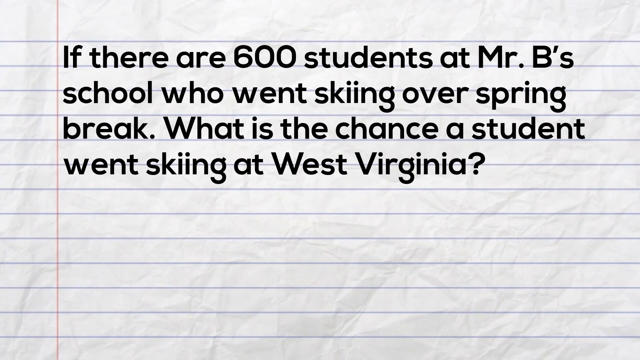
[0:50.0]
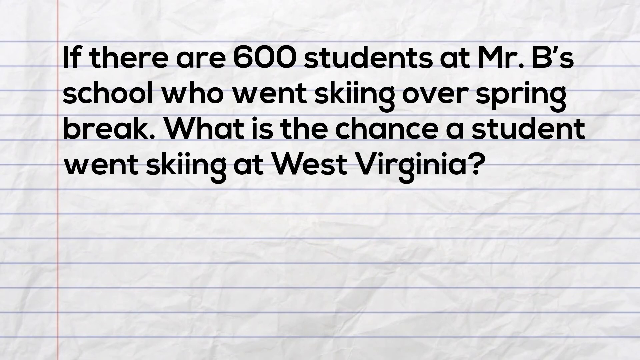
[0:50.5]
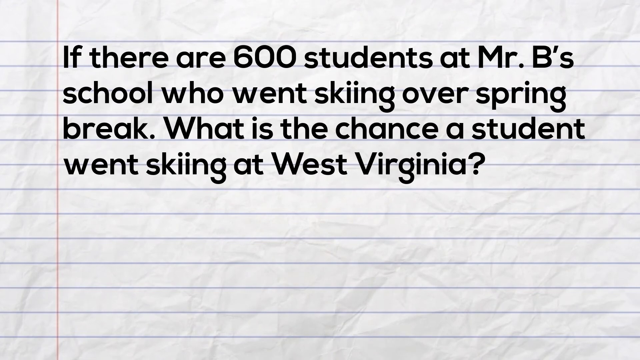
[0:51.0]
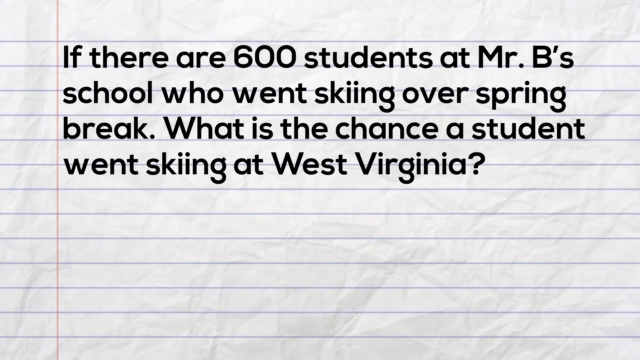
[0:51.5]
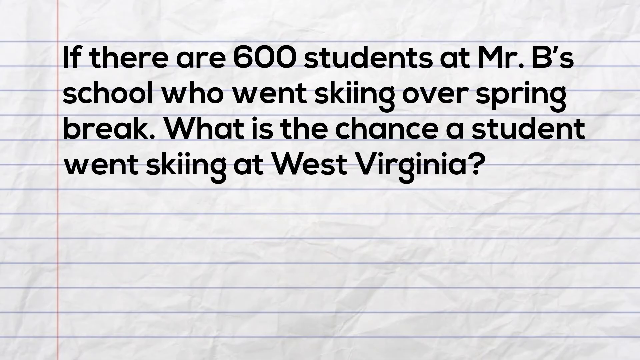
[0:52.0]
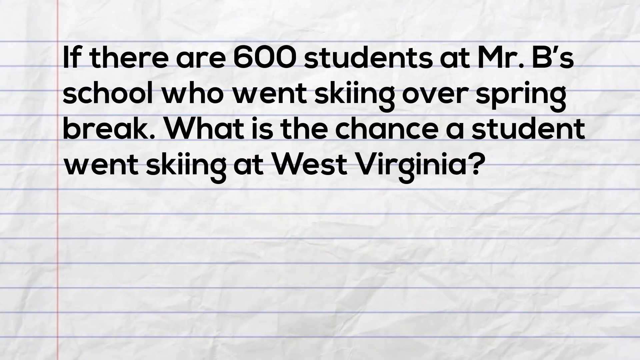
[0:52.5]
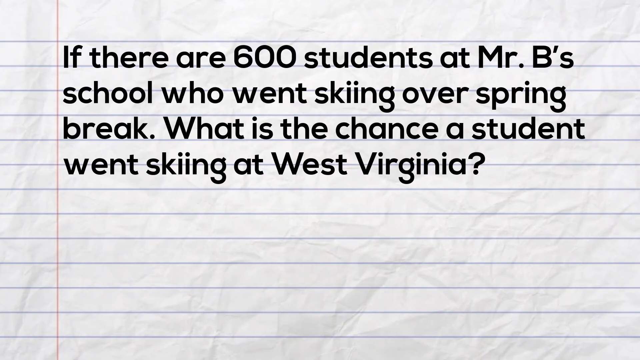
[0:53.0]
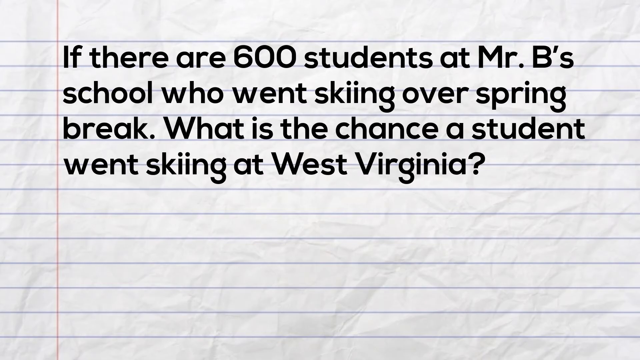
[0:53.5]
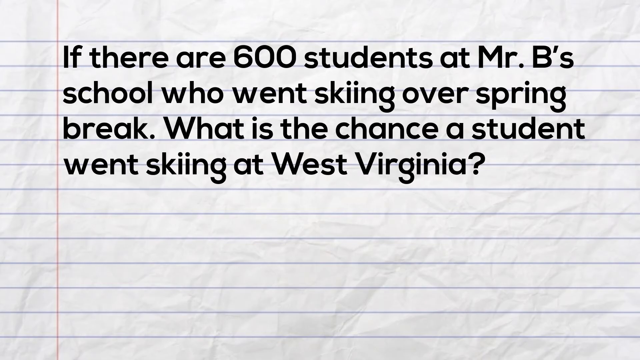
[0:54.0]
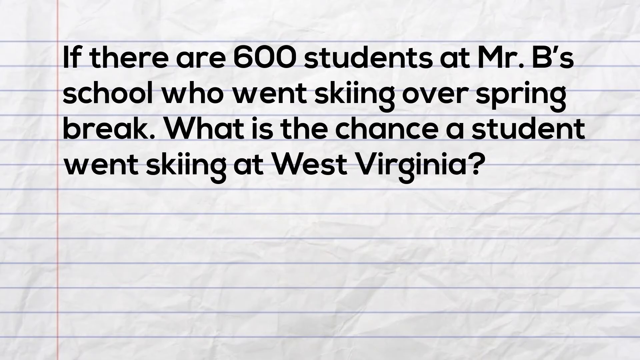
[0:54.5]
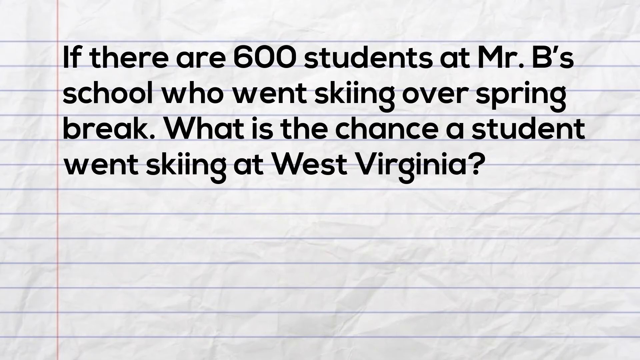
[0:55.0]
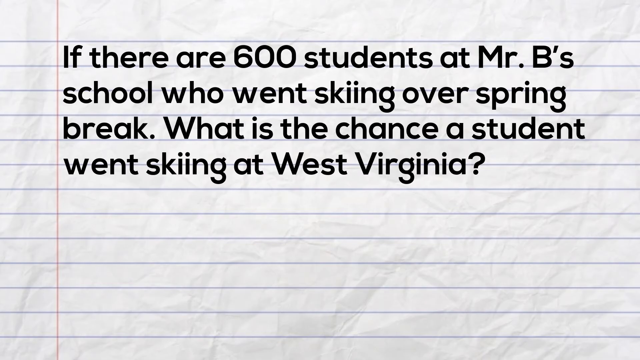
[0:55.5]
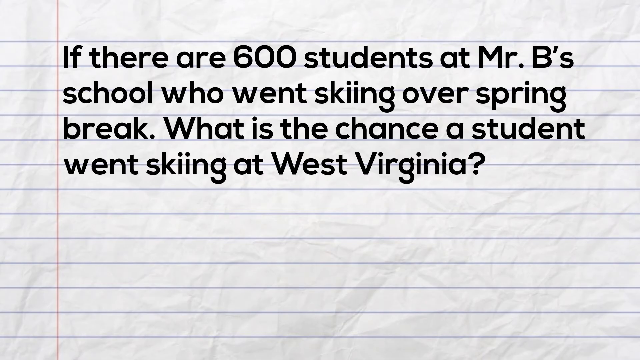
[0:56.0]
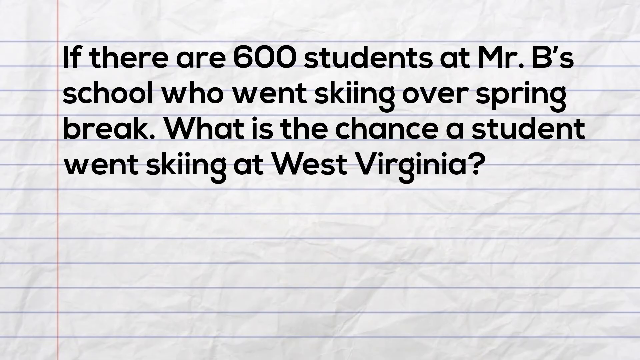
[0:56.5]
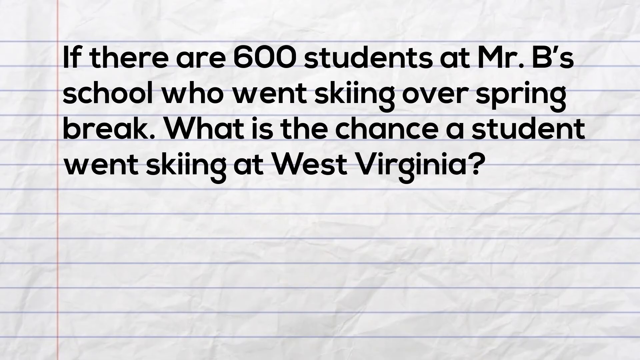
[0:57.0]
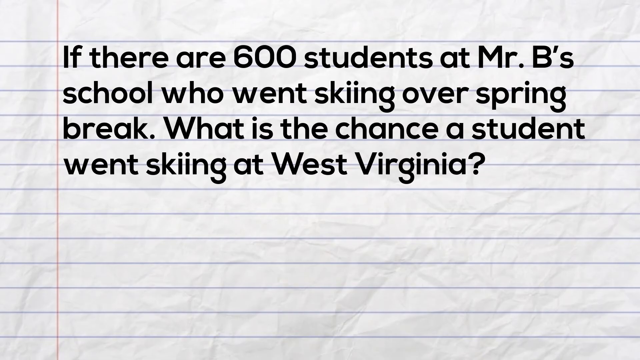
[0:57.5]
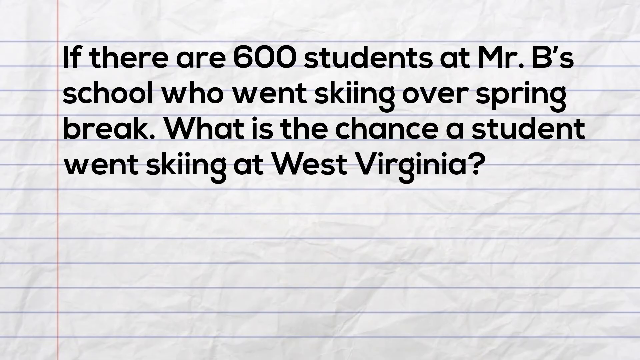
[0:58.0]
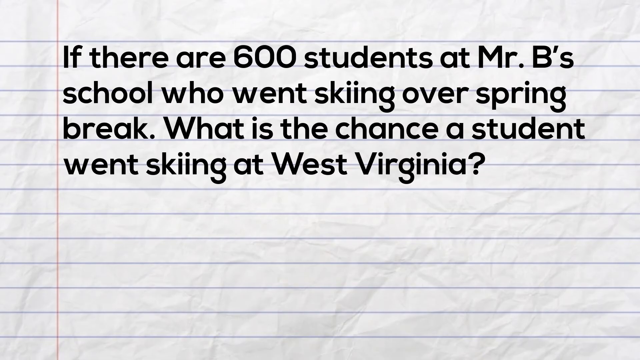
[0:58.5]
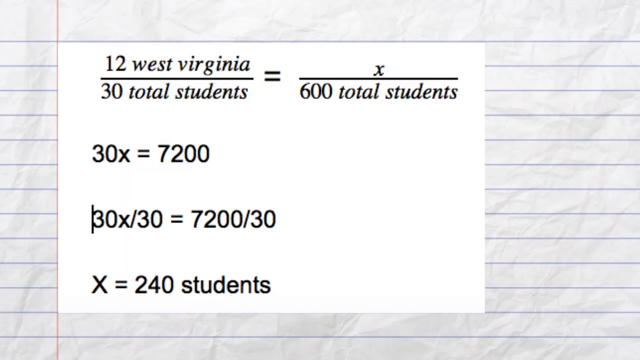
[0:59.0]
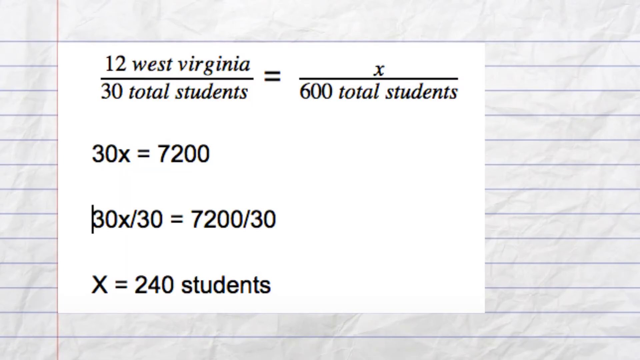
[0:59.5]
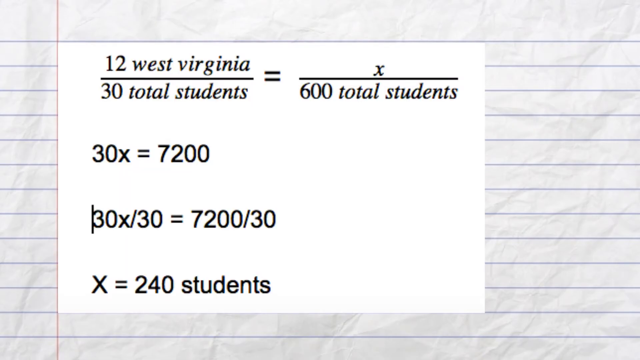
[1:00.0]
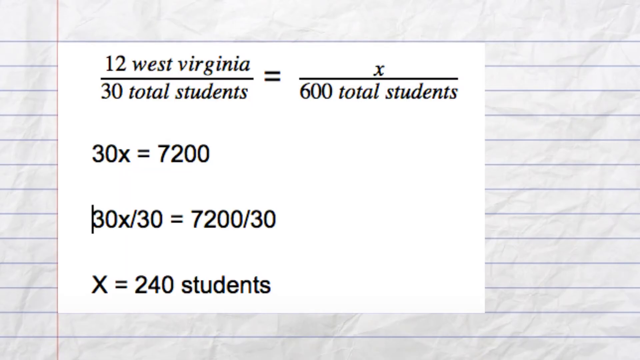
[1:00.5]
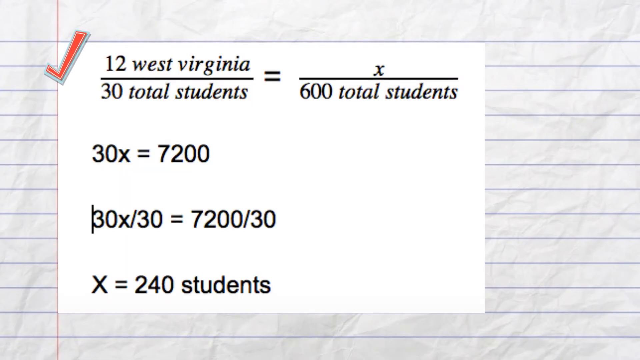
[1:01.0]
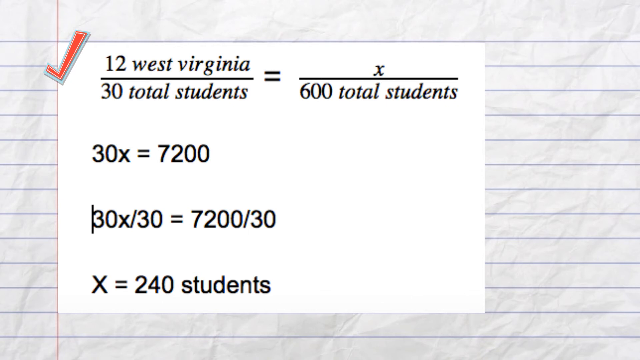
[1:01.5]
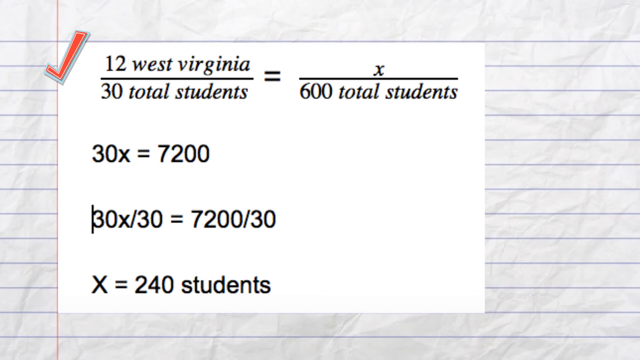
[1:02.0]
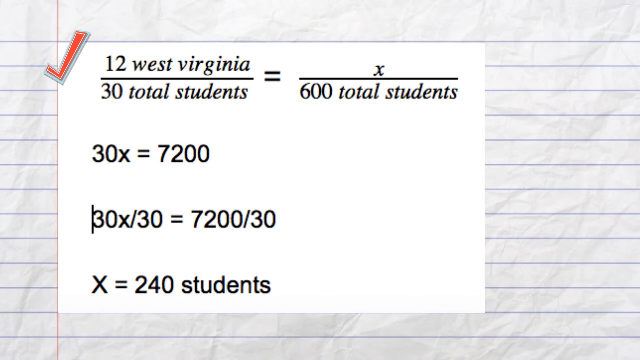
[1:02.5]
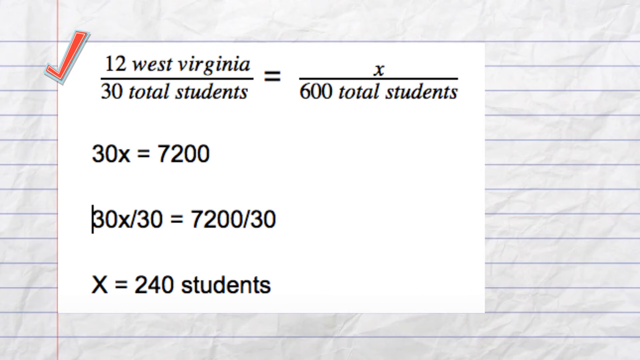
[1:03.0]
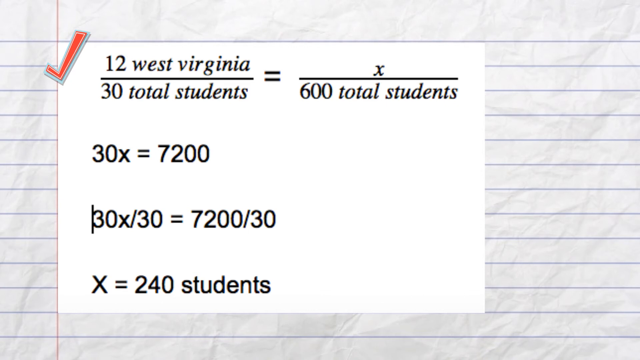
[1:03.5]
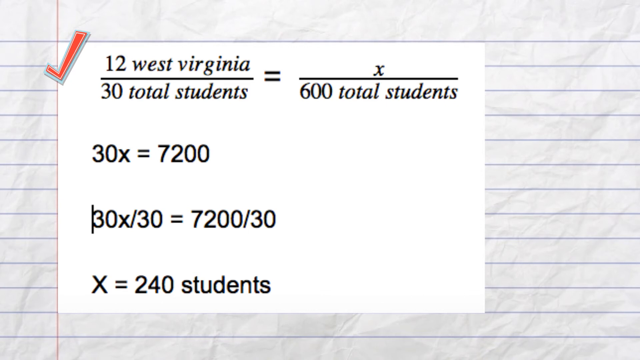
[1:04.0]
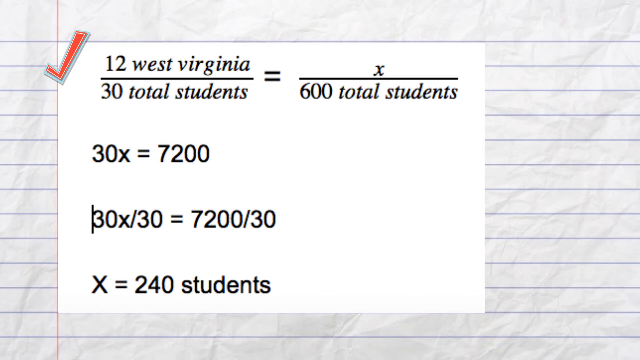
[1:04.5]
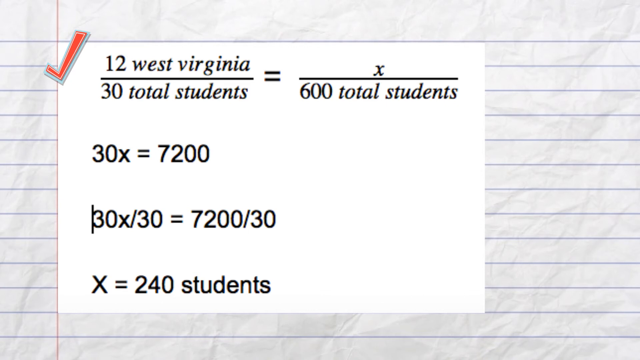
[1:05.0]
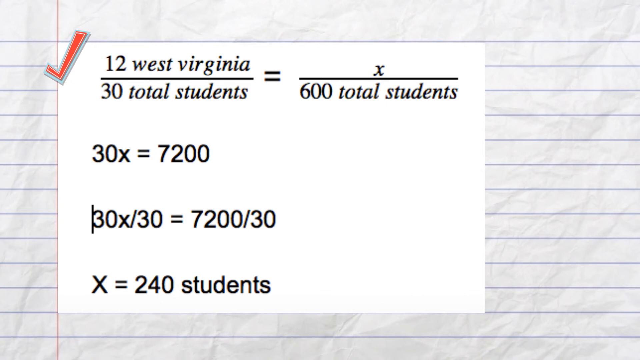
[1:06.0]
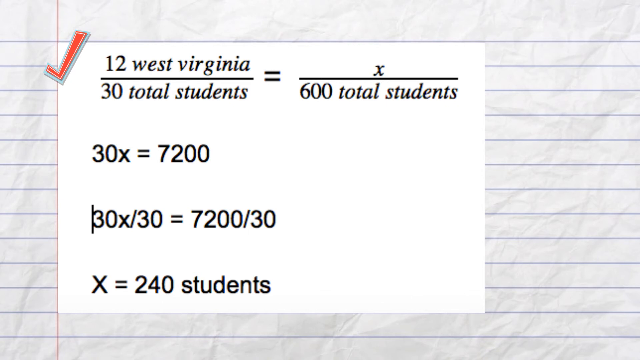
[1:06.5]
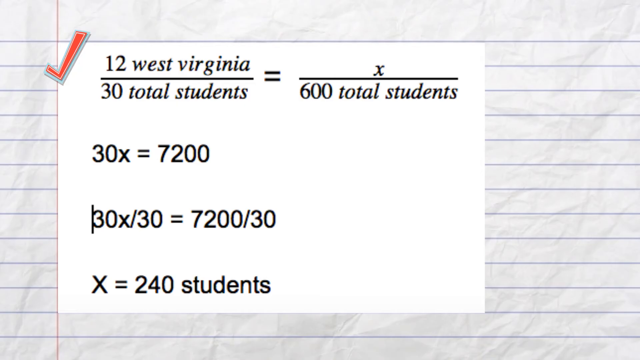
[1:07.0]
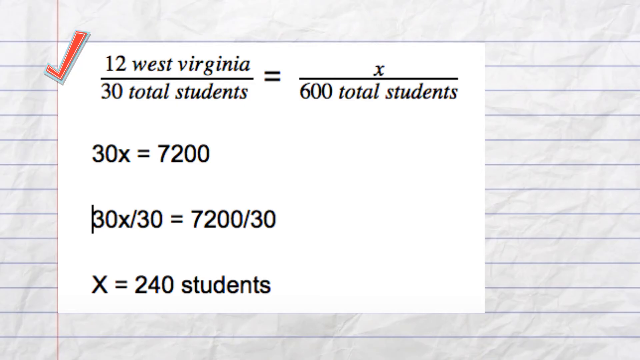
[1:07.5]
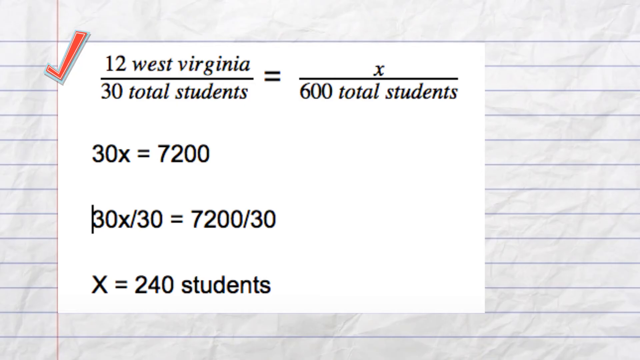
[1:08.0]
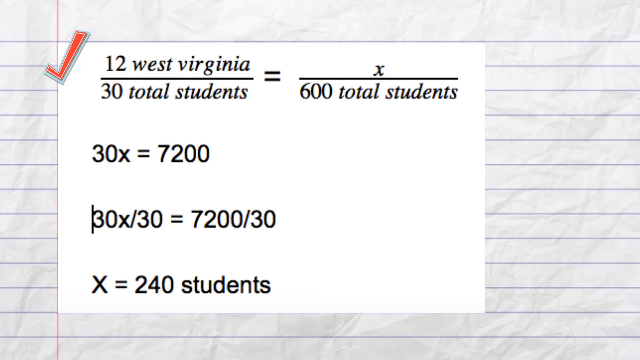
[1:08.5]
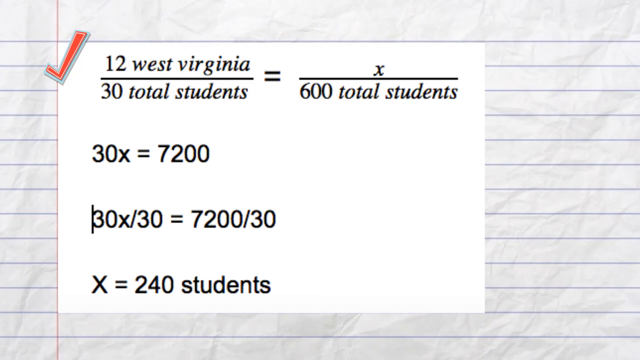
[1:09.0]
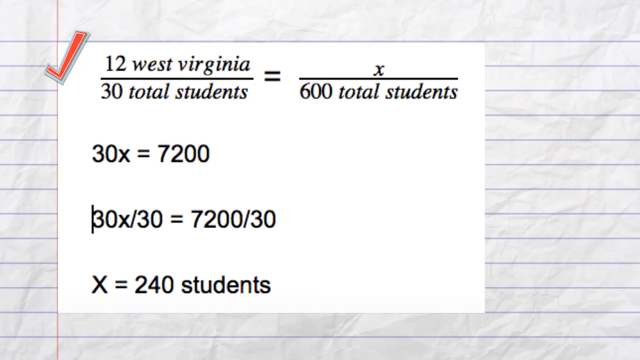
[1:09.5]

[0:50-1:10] The question about the 600 students at Mr. B's school who went skiing over spring break and the chance a student went skiing at West Virginia stays on screen for a moment, then the text disappears. Another white inset rectangle, closer to a square, appears on the notebook page, and the ratio is set up with fractions: 12 West Virginia over 30 total students equals x over 600 total students. This reduces to 30x = 7,200, both sides are divided by 30, and the last line of the computation shows x = 240 students. An orange check mark appears by the ratio as it is set up.